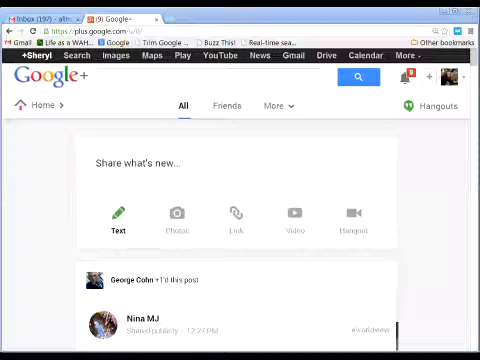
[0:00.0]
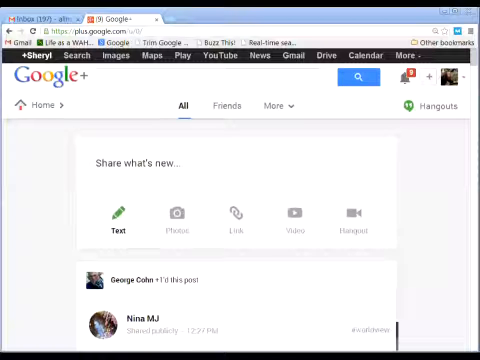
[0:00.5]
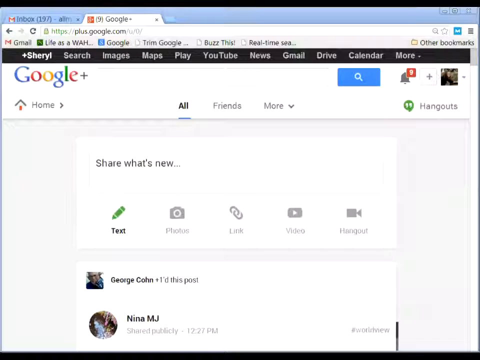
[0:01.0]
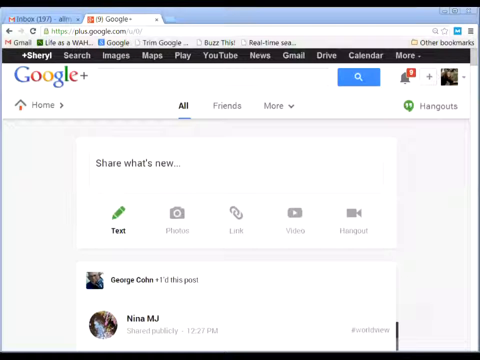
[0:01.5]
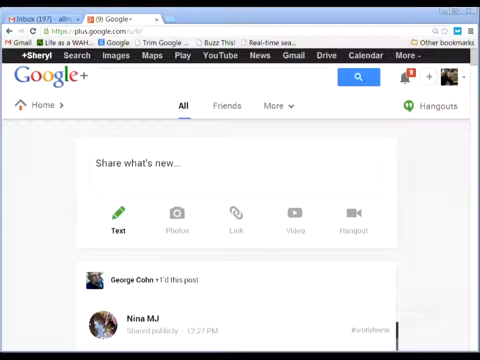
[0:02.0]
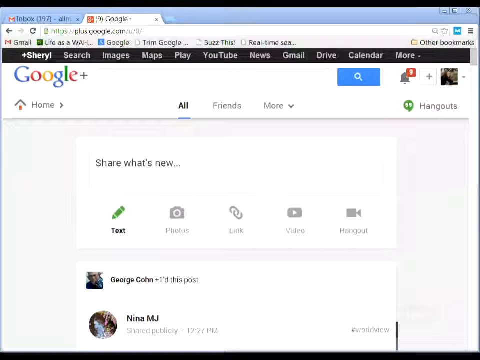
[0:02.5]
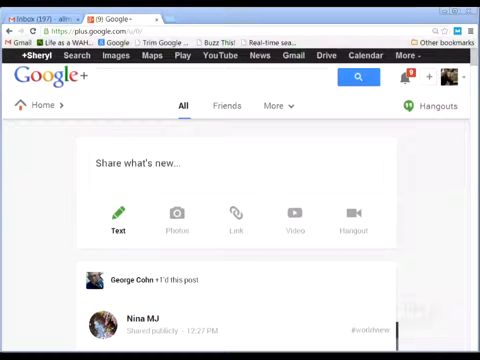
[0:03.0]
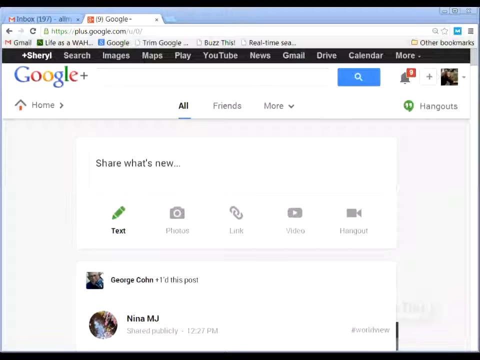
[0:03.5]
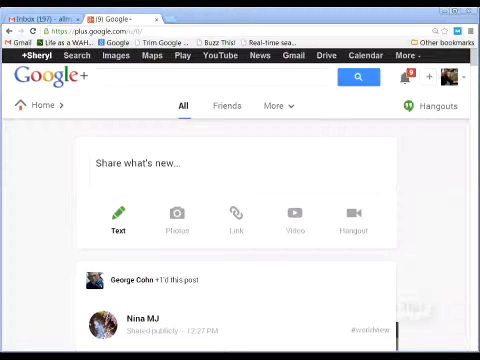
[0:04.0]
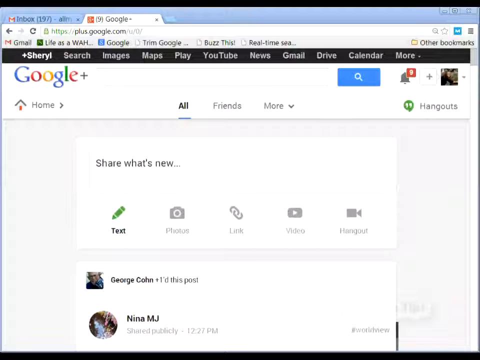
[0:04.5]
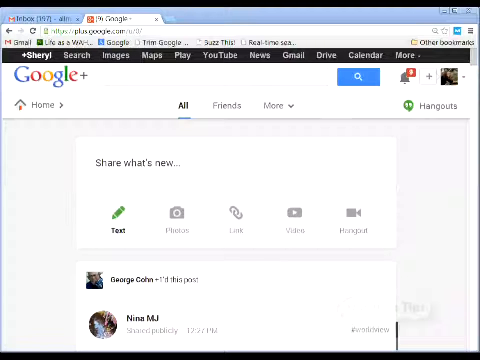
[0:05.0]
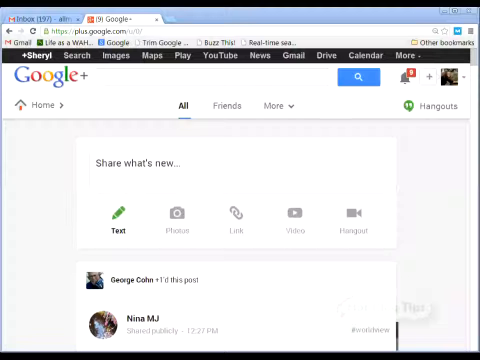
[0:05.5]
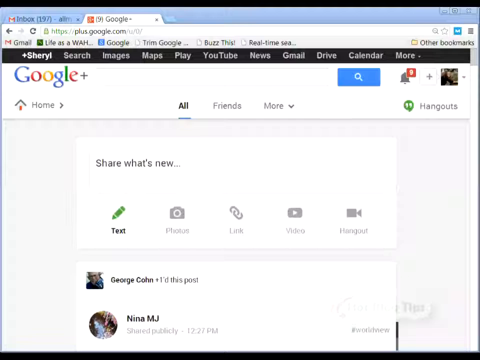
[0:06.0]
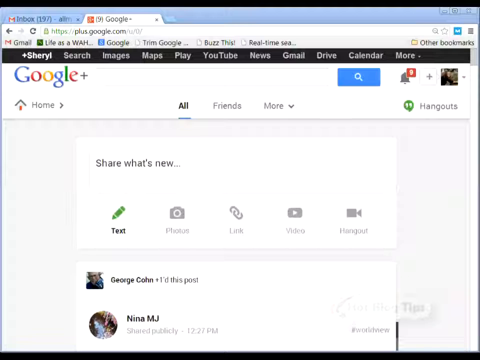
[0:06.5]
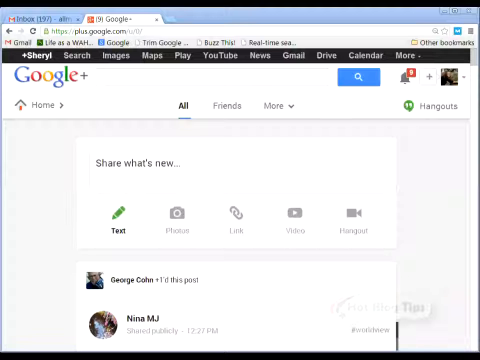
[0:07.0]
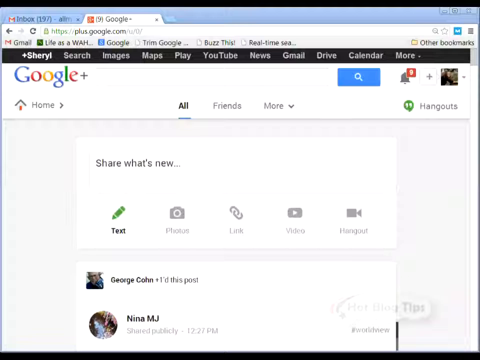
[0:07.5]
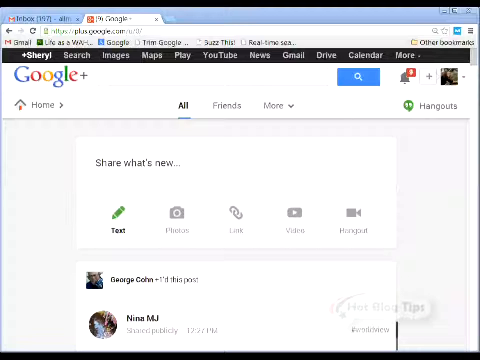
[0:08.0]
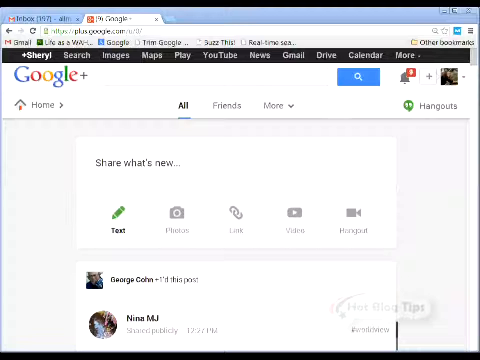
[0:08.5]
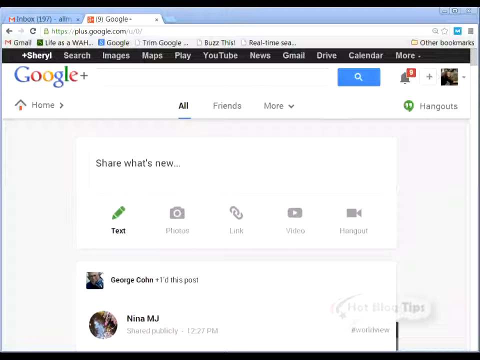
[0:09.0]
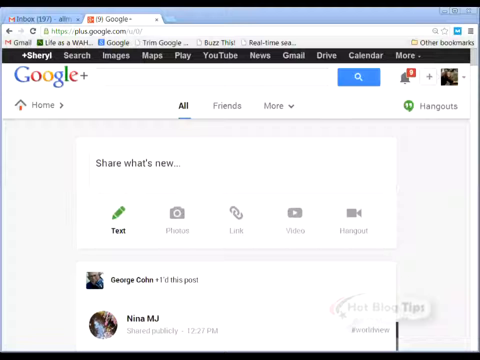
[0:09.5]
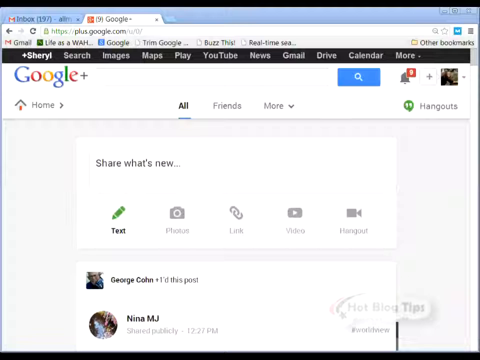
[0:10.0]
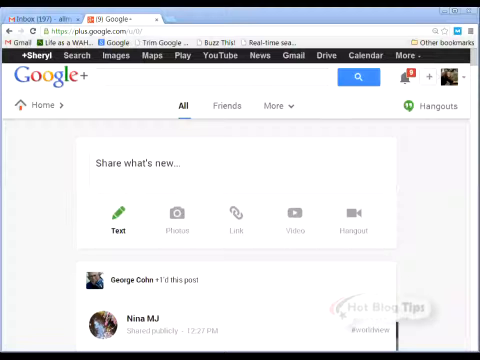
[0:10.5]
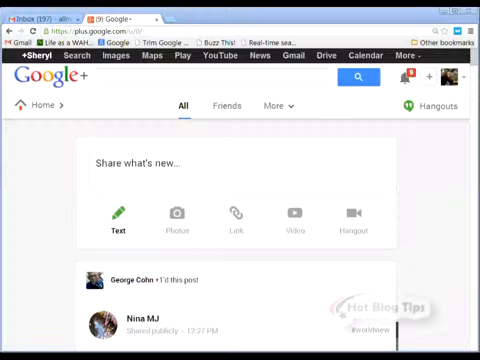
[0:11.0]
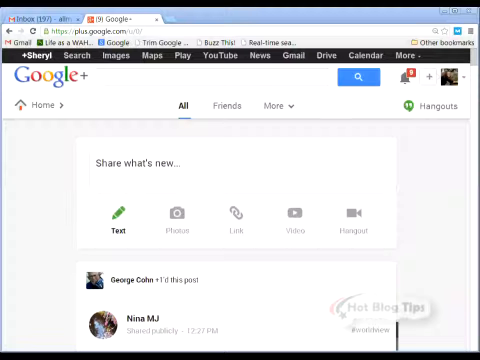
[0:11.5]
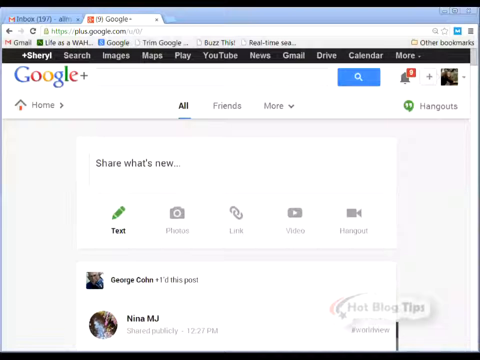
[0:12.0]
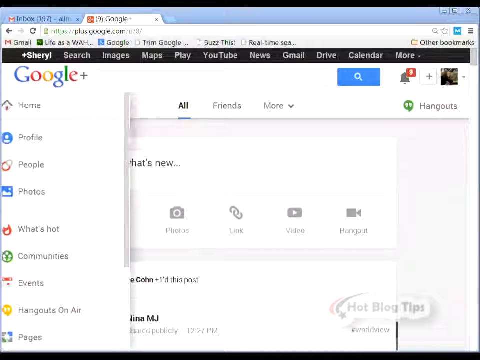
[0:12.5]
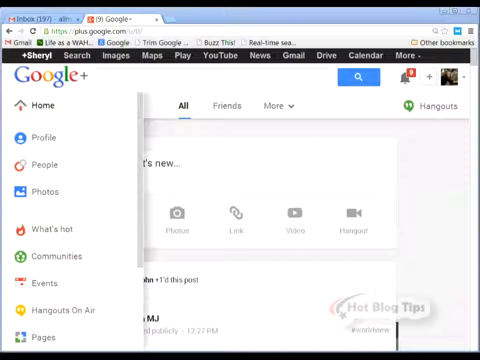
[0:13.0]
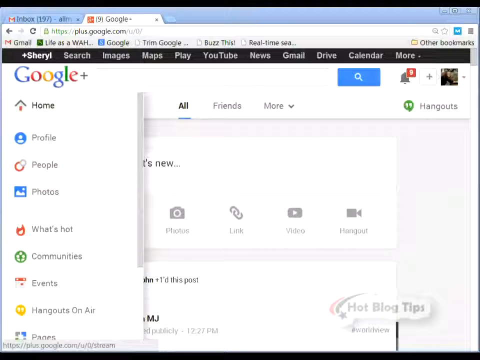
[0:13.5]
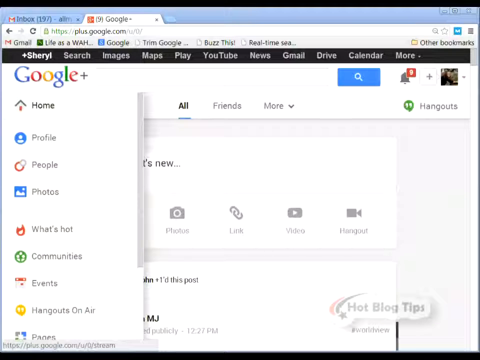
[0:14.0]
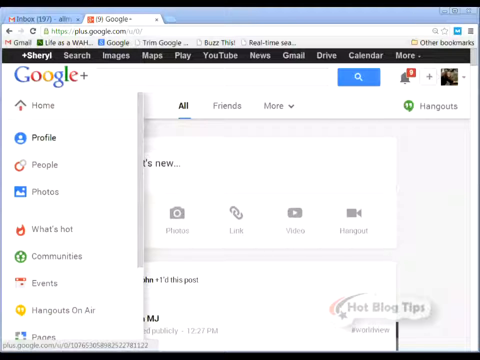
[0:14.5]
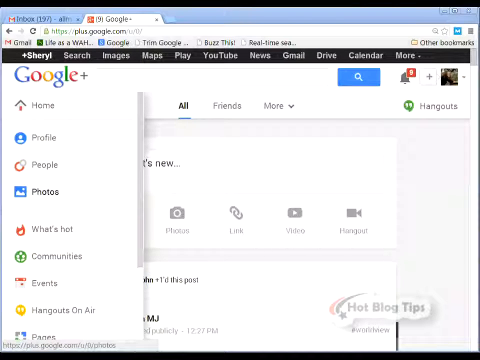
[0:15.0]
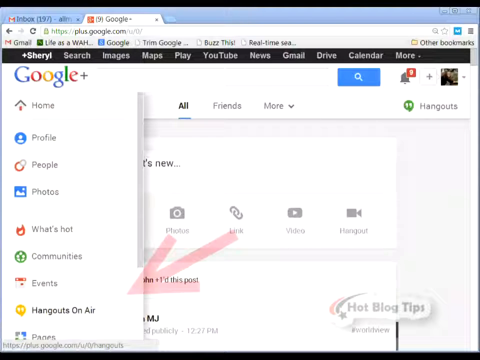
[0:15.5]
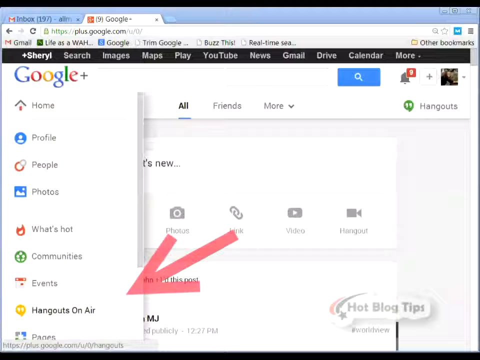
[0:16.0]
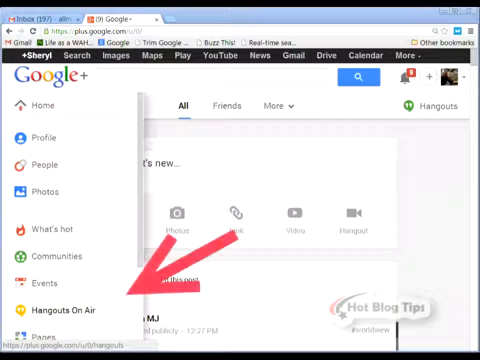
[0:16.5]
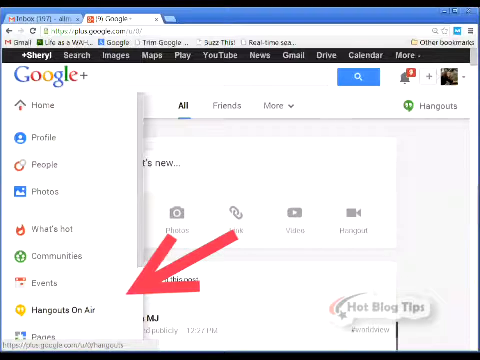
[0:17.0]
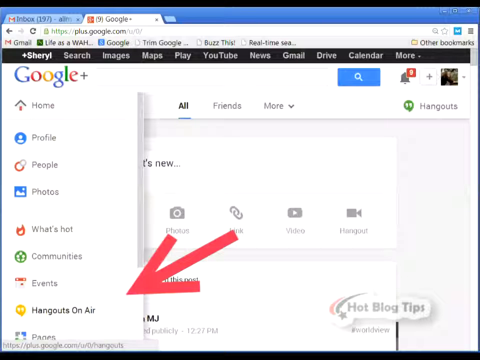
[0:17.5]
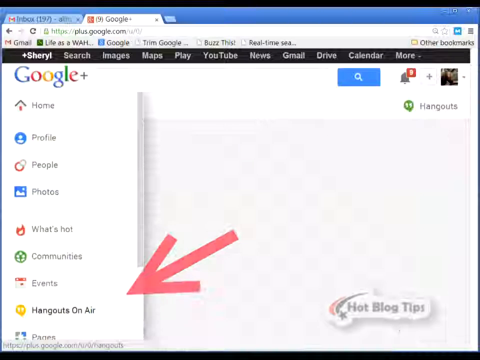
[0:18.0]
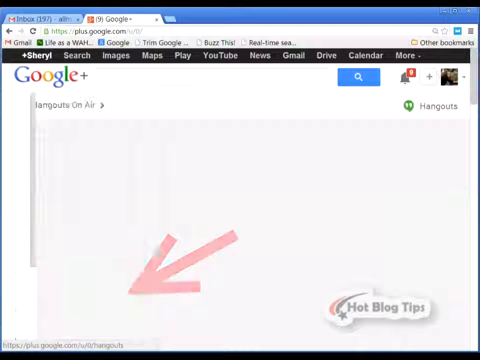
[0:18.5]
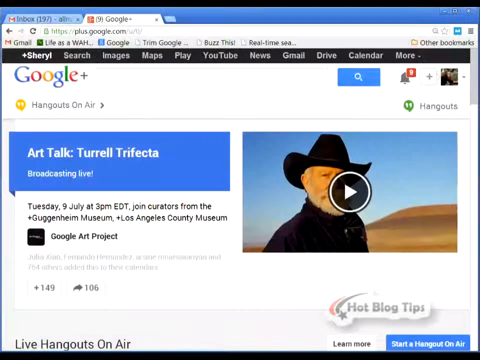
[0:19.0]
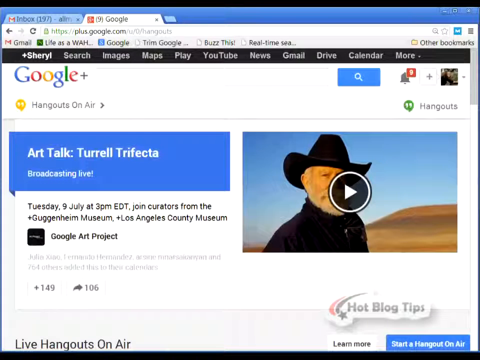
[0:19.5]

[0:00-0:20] A Google page is open with the address line reading plus.google.com, and the user name is Hangouts. Across the top of the screen are "Home," "All," "Friends," "More" and "Hangouts." In the middle is "Share What's New," apparently with options for text, photos, links and video. Below that is a post by George Kohn, one day old, possibly an artist the user follows, and also Linda MJ, maybe another user. On the left a dropdown menu lists "Home," "Profile," "People," "Photos," "What's Hot," "Events" and then "Hangouts On Air." Apparently Hangouts On Air is clicked, and the next page shows events, including "Art Talk, Turrell Trifecta" on Tuesday, July 9th, 3 p.m. Eastern Time. On the right is a video, maybe featuring an artist.